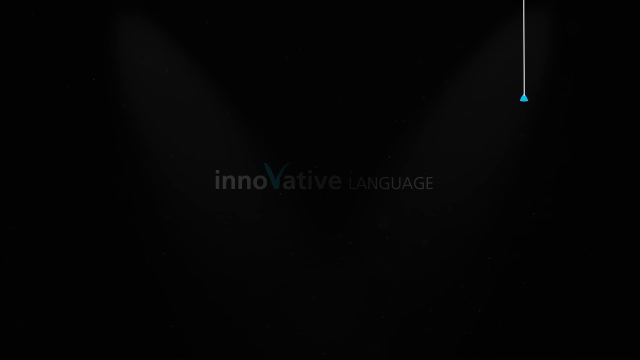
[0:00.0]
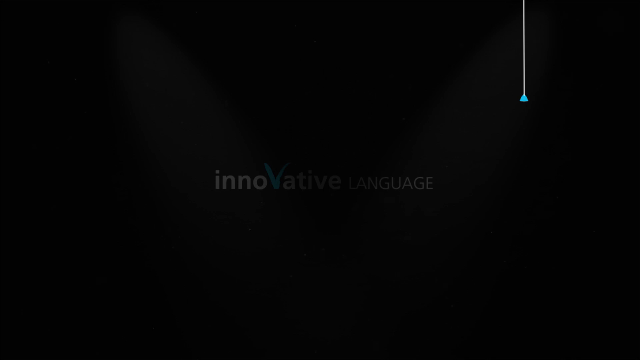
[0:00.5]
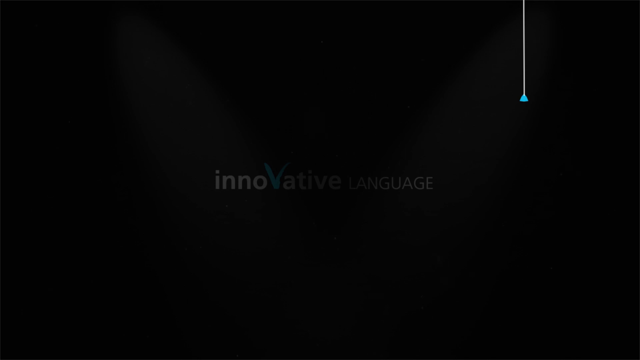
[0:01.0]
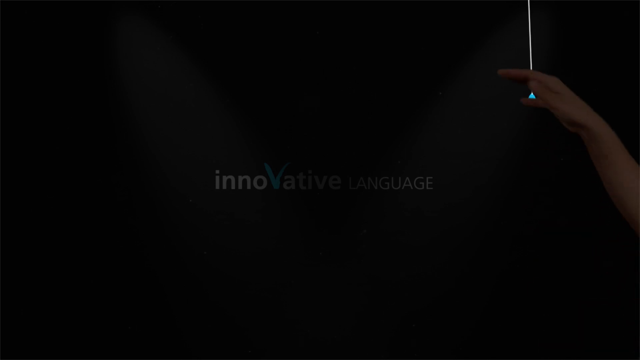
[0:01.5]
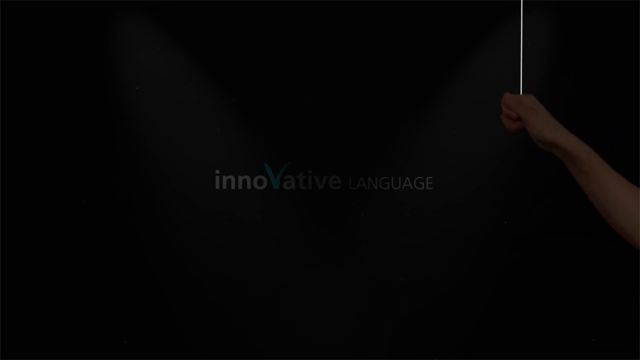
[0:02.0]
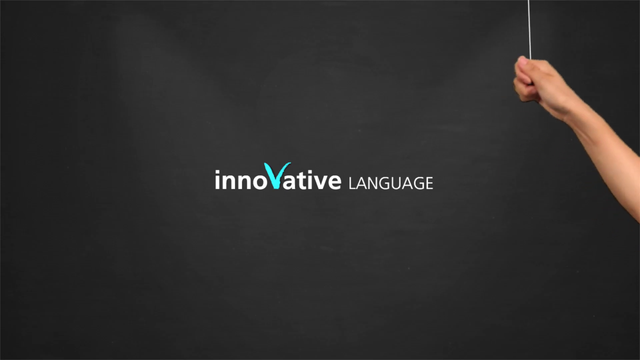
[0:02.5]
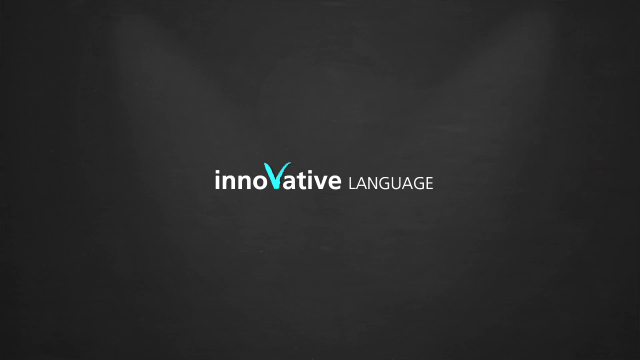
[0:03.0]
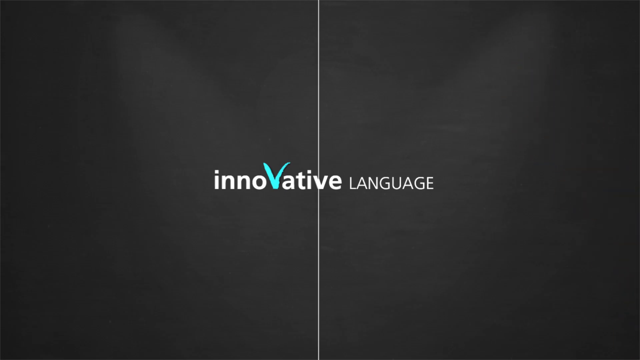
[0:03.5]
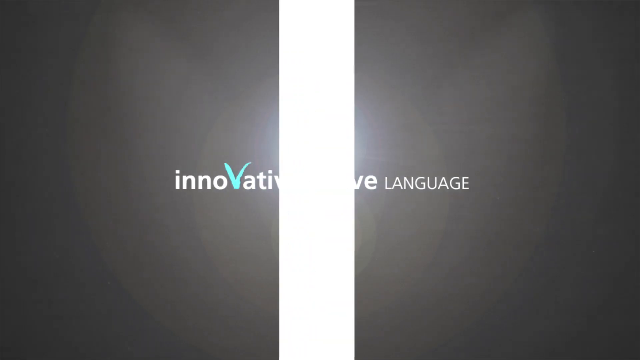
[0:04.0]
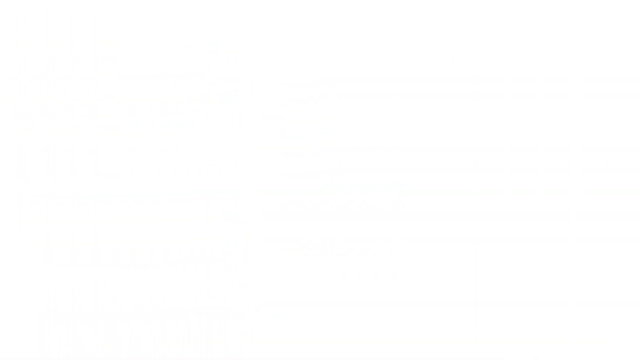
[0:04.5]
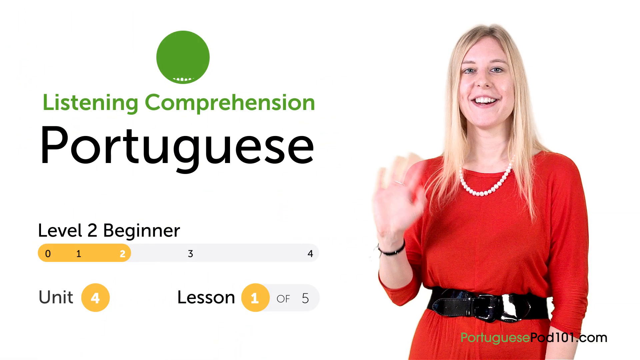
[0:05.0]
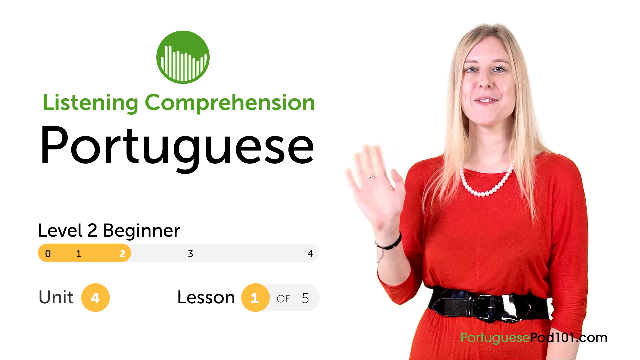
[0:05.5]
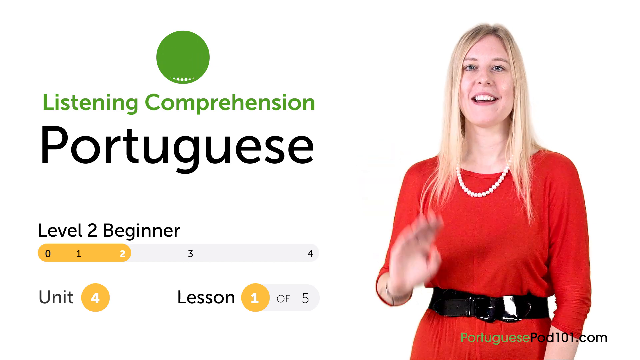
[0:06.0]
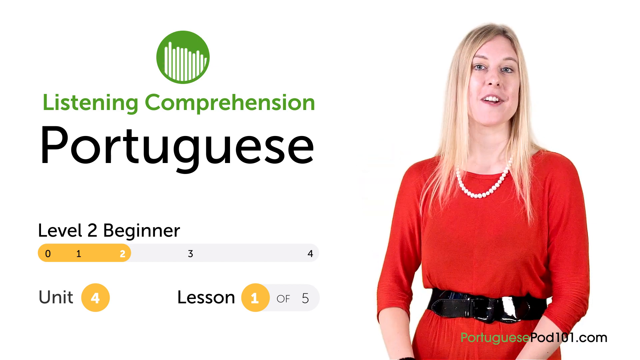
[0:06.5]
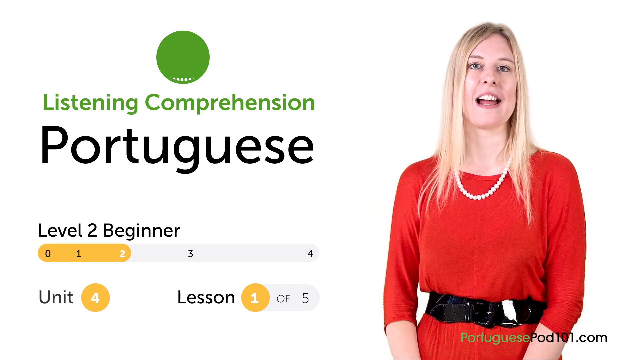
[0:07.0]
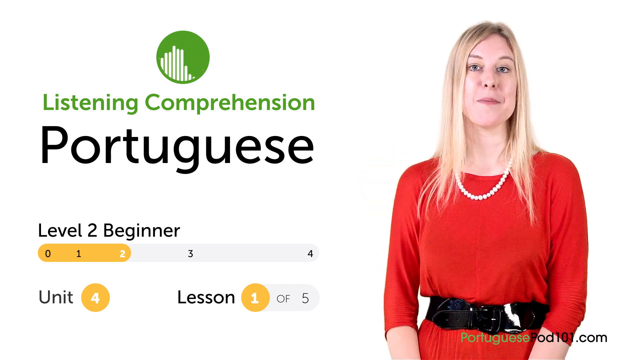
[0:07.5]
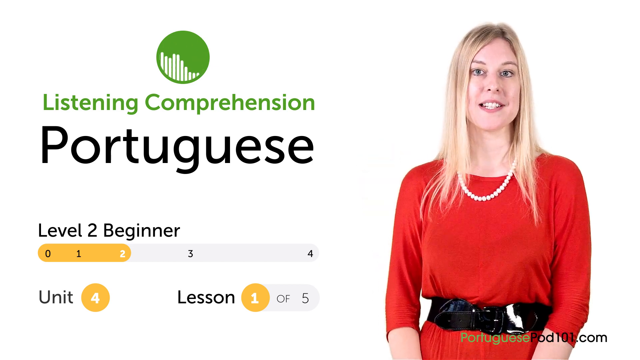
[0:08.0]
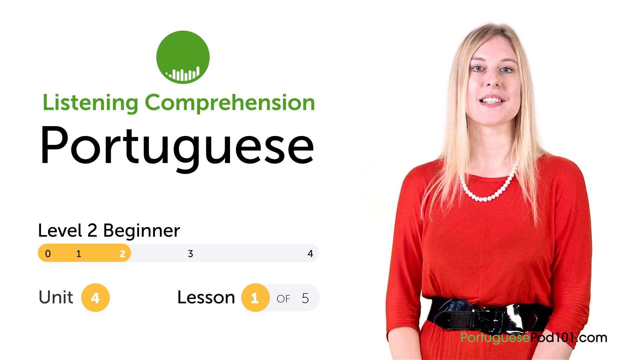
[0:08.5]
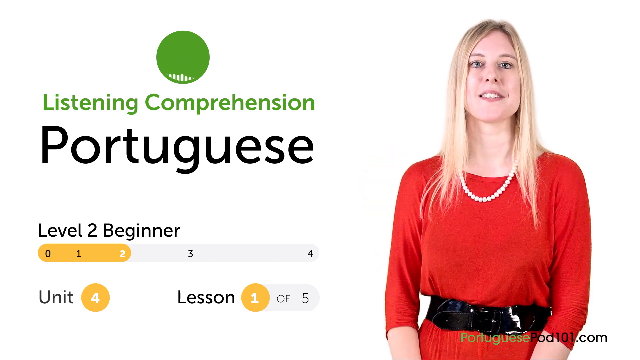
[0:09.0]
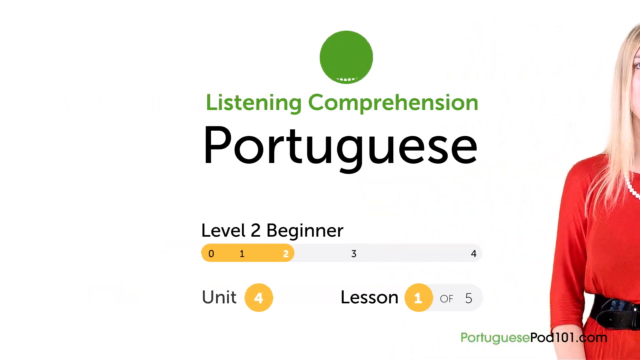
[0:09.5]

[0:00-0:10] A black background has the text "innovative language" written across it in lowercase letters in a large font. Most of the letters are white and round, but the V is highlighted in green and appears to be curved. A lady in a red shirt appears, and some of the proficiency levels are shown: level 0, 1, 2, 3 and 4. Within each level there are units and lessons 1 to 5.